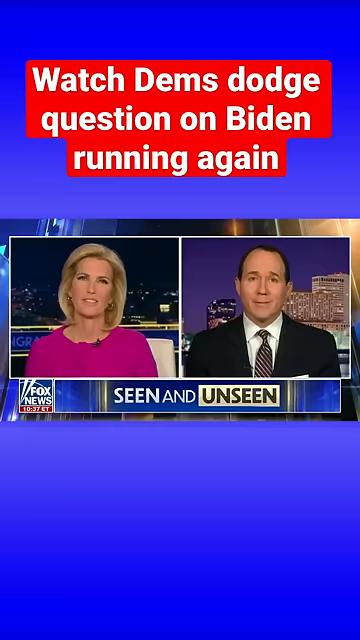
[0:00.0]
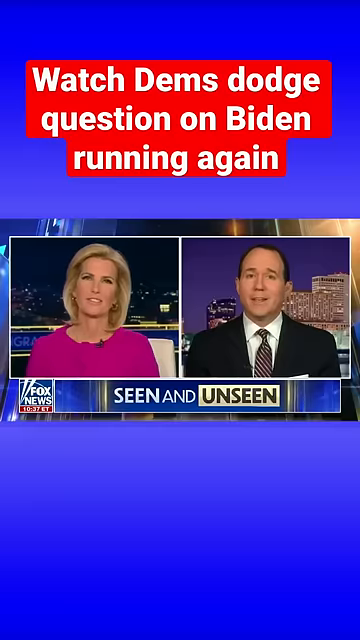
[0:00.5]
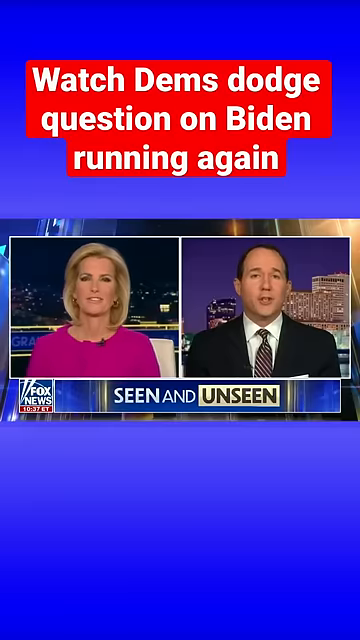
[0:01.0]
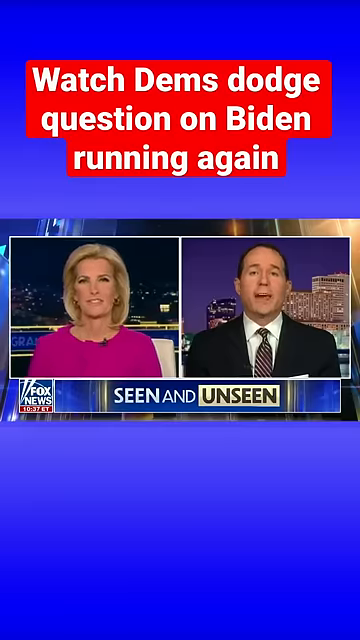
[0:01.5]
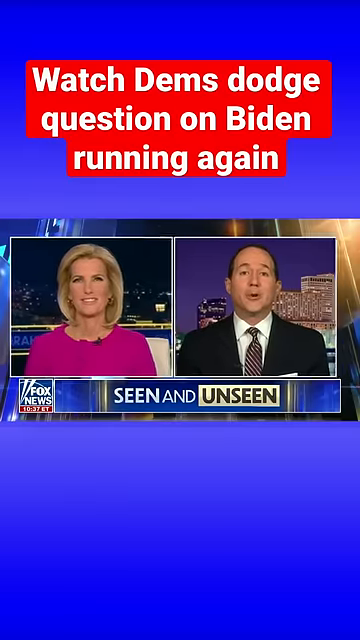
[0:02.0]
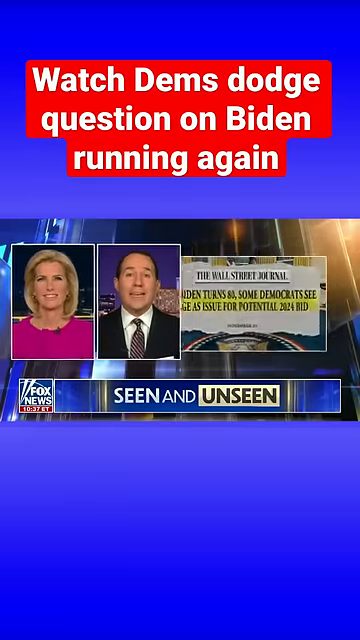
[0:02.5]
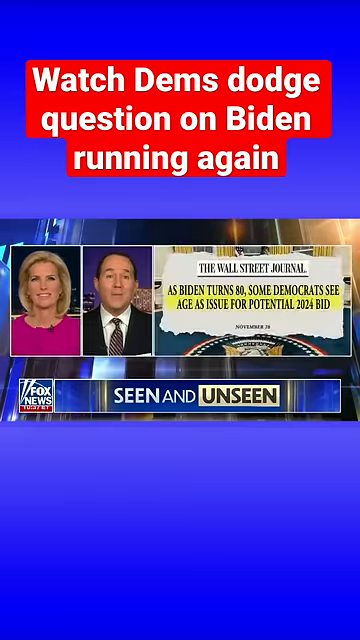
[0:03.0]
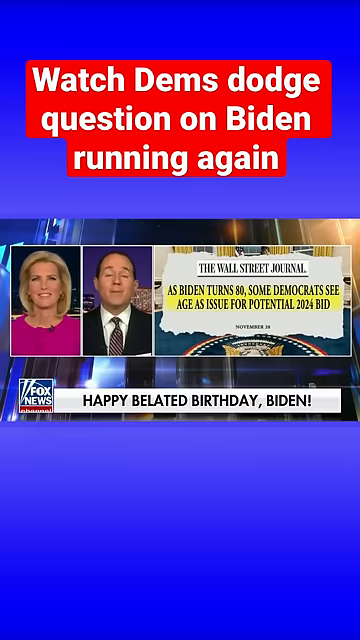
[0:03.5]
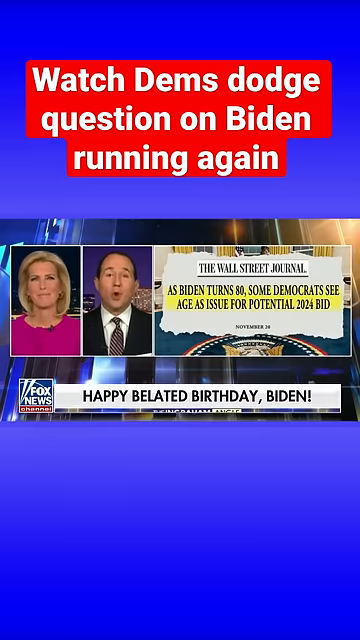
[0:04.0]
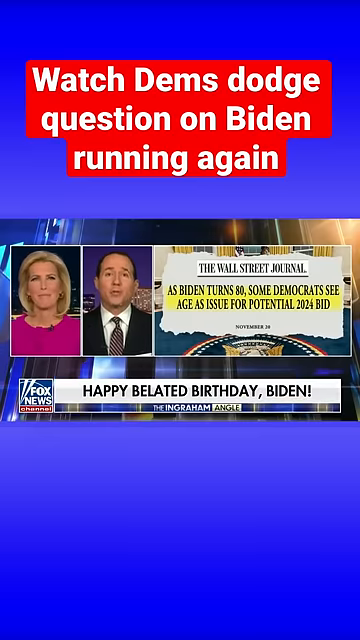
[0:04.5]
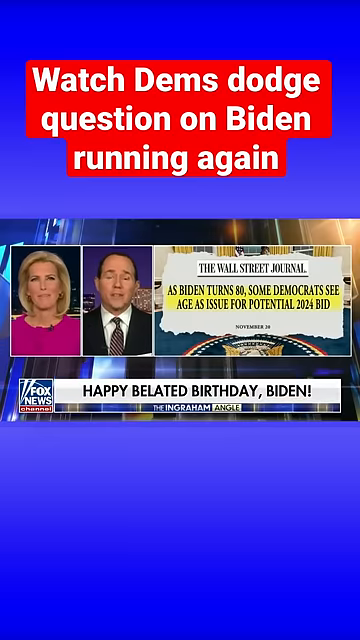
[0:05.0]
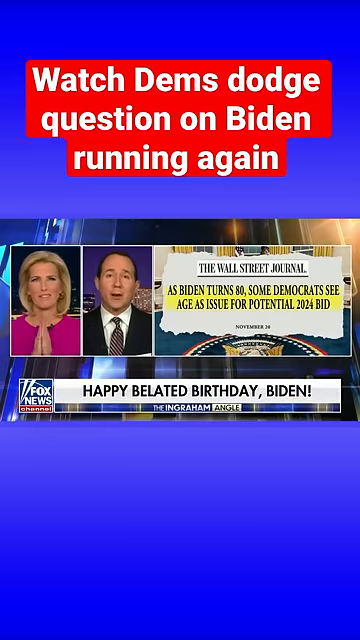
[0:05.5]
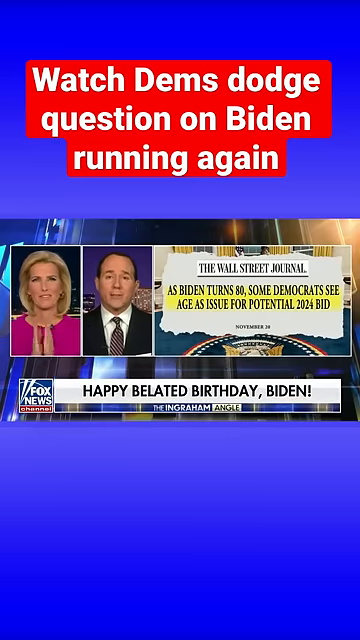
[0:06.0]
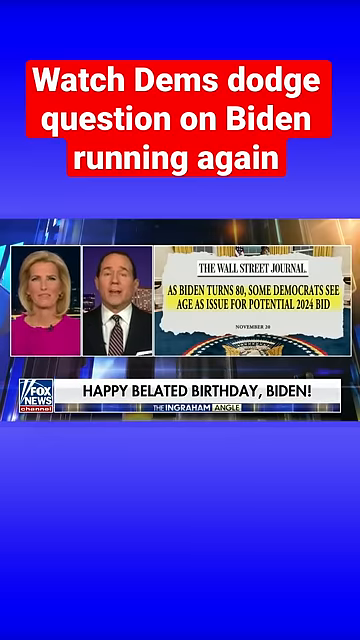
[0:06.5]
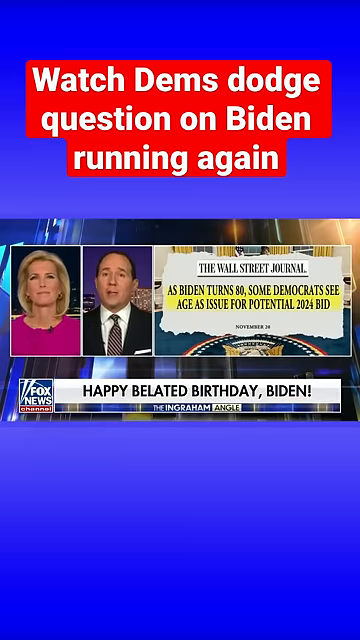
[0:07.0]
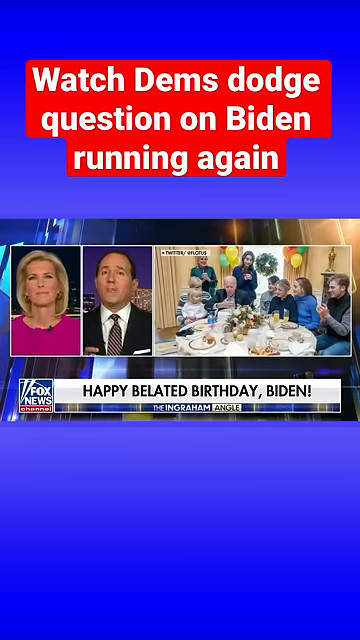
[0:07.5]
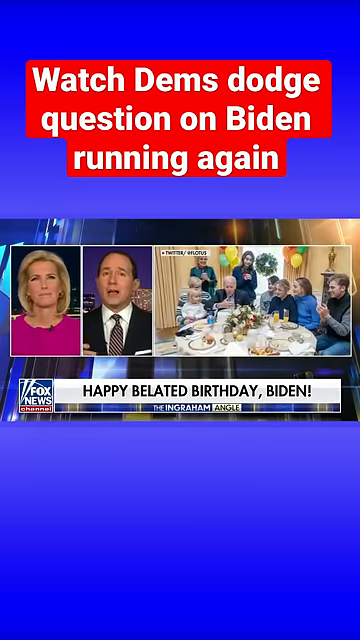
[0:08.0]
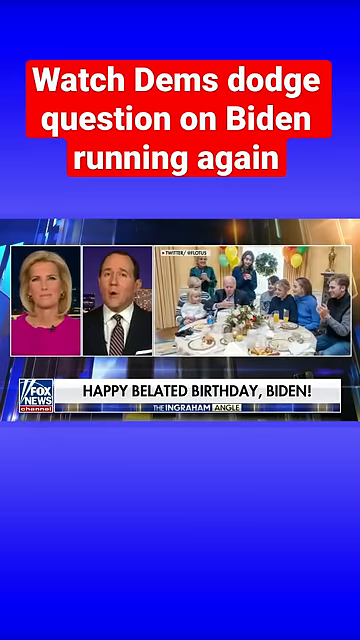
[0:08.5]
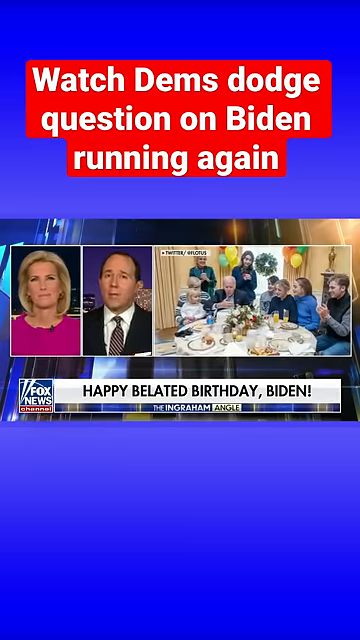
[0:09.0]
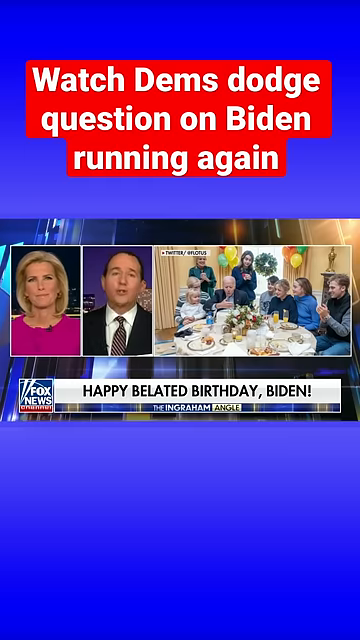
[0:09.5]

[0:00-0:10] The video is from the Fox News channel. On screen is the text "watch Dems dodge question on Biden running again." A Wall Street Journal item reads "As Biden turns 80, some Democrats see age as an issue for potential 2024 bid," posted on November 20th, with the year unclear. The words "happy belated birthday" appear, along with a picture of Biden sitting at a table for his birthday, apparently with his kids and grandkids.